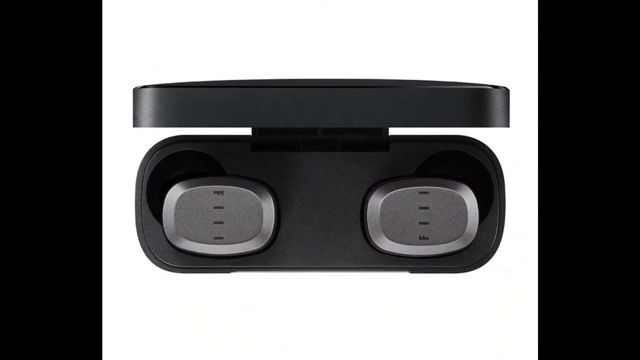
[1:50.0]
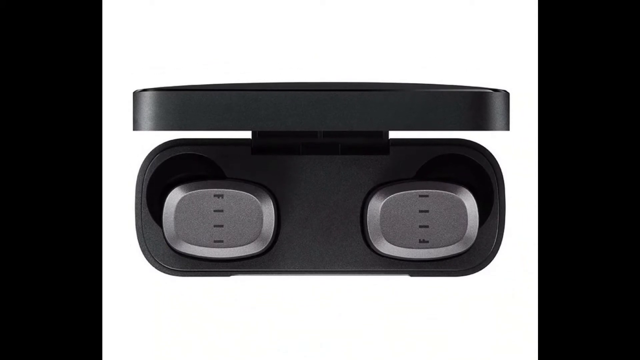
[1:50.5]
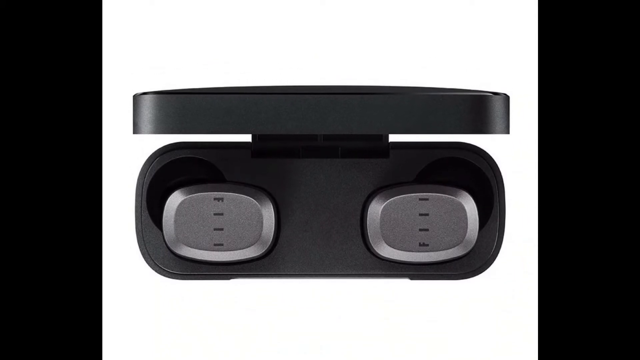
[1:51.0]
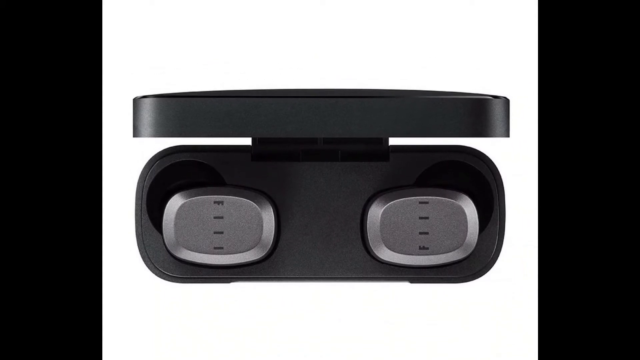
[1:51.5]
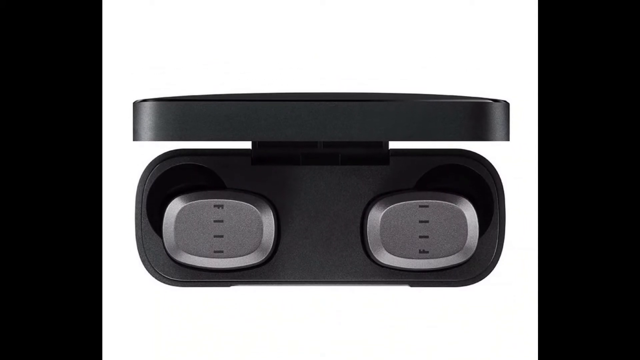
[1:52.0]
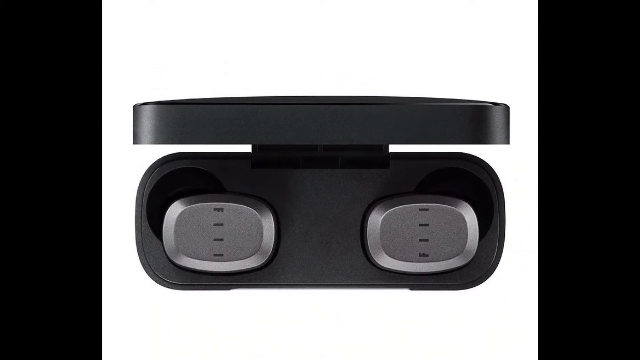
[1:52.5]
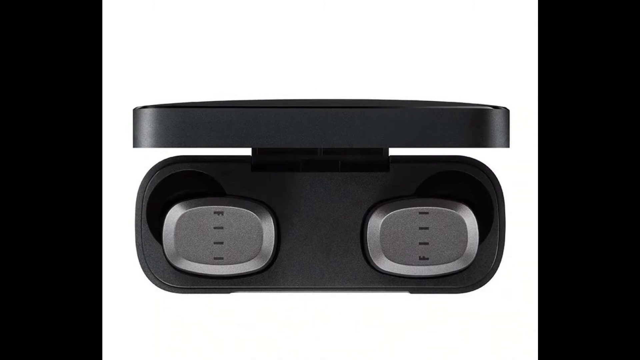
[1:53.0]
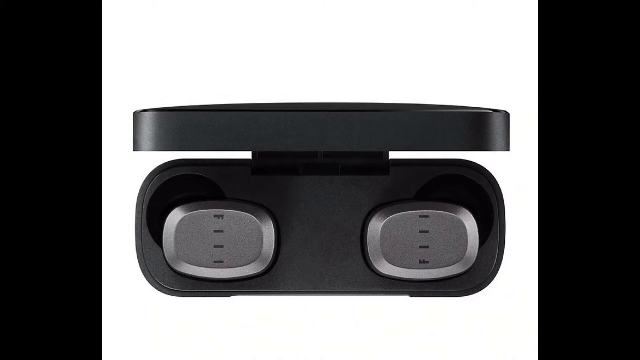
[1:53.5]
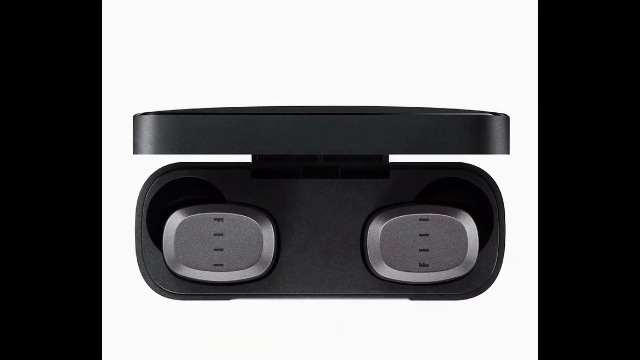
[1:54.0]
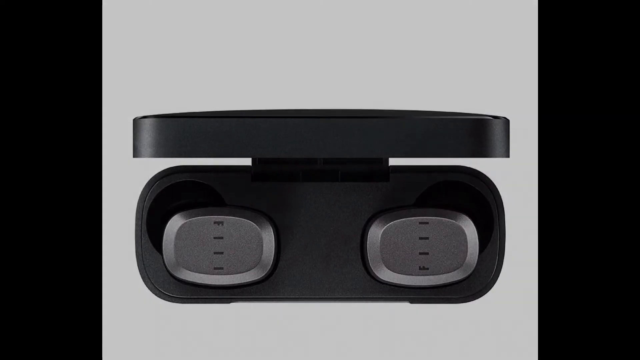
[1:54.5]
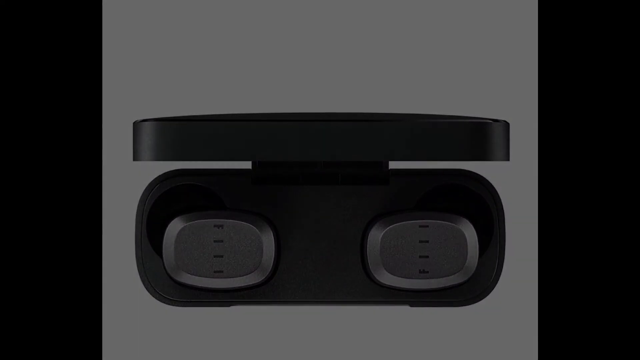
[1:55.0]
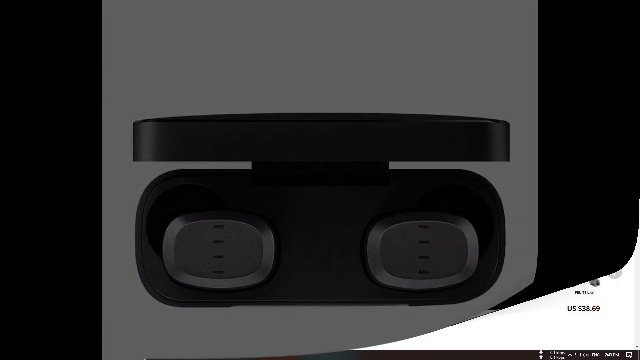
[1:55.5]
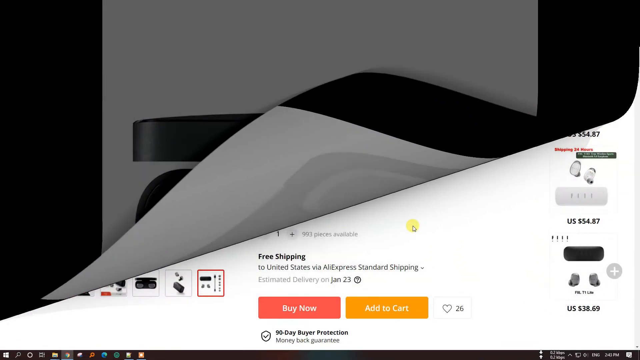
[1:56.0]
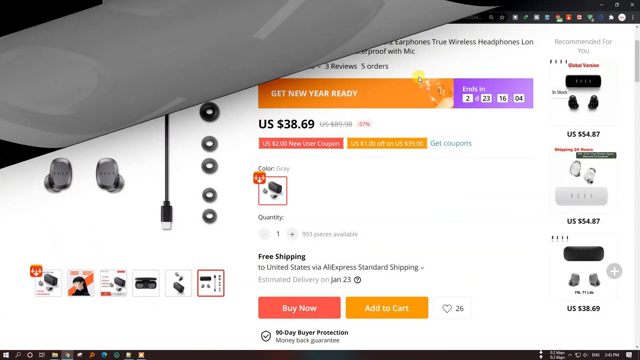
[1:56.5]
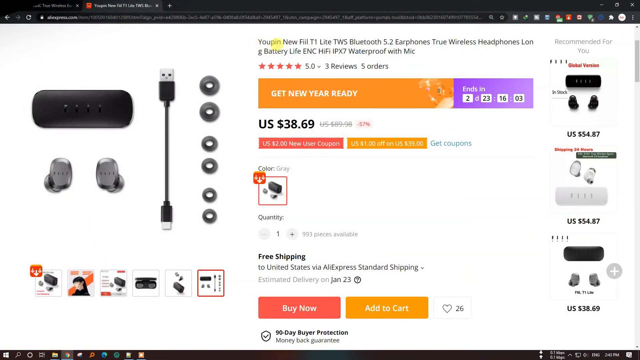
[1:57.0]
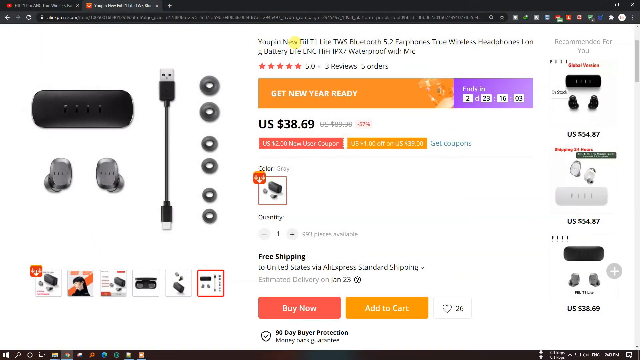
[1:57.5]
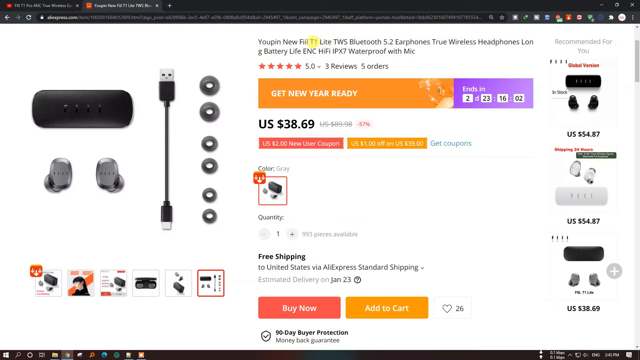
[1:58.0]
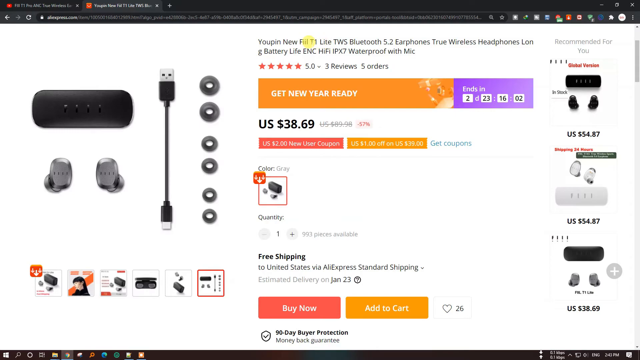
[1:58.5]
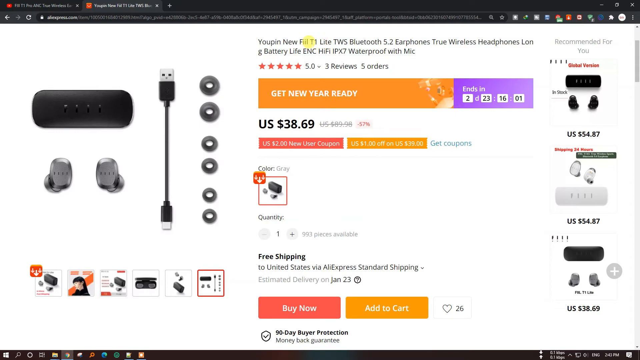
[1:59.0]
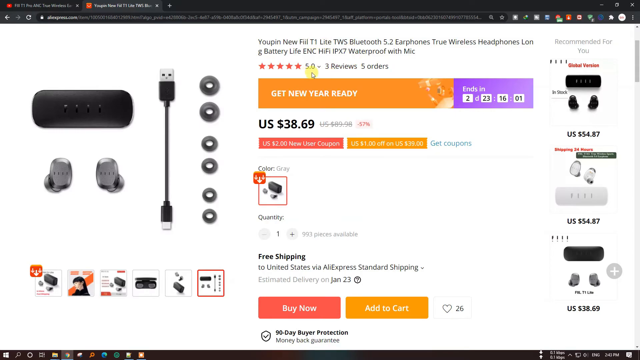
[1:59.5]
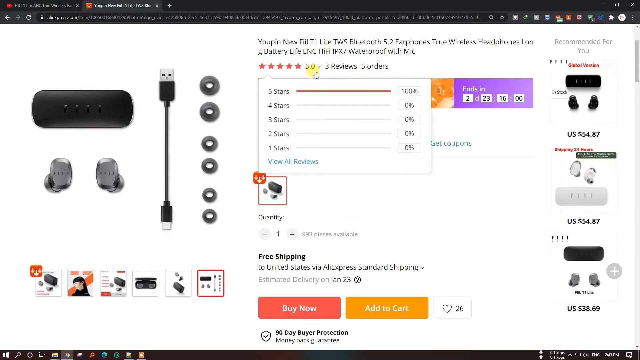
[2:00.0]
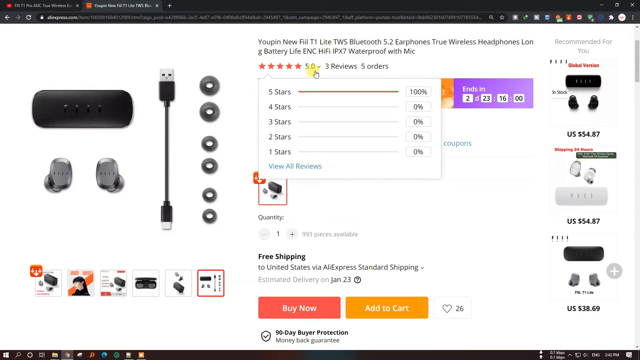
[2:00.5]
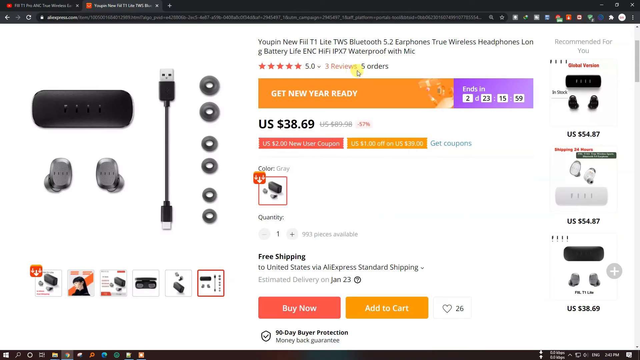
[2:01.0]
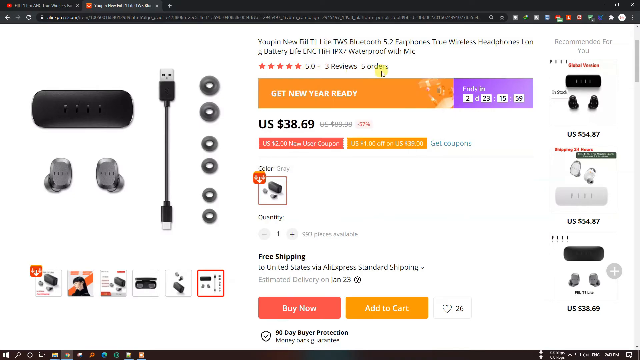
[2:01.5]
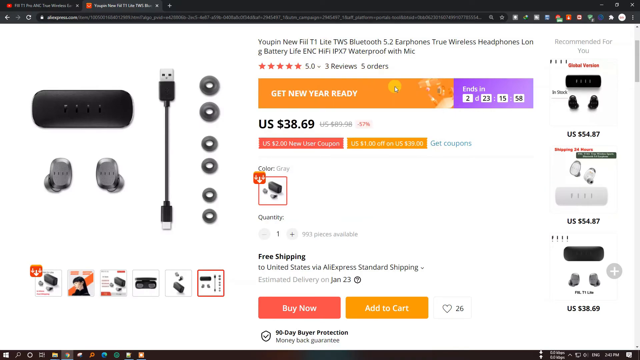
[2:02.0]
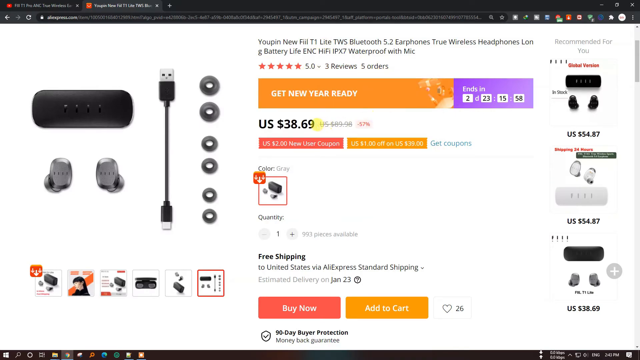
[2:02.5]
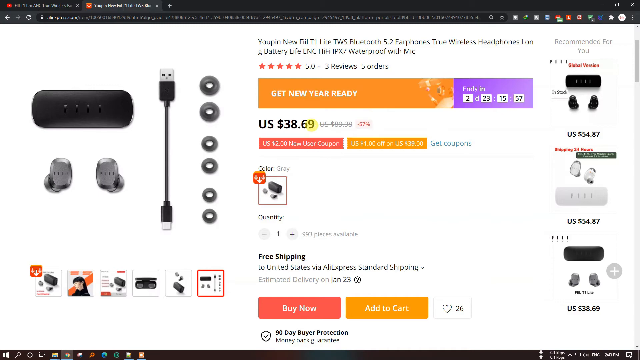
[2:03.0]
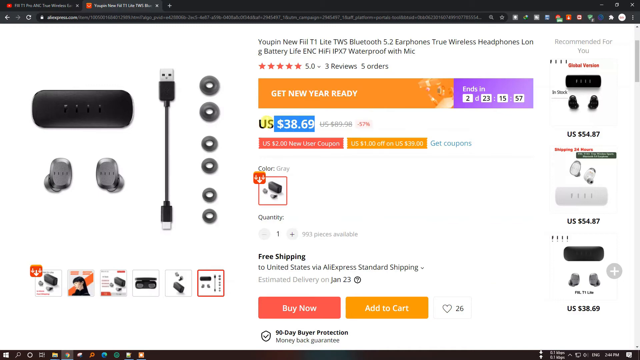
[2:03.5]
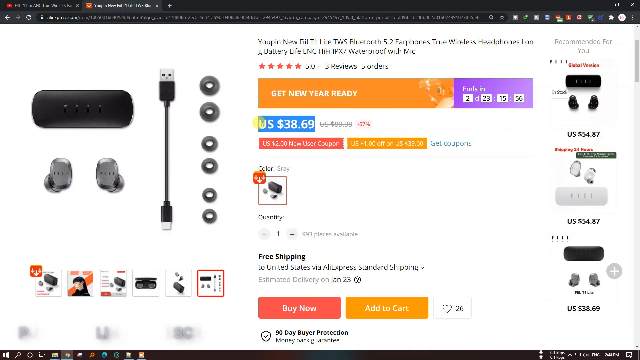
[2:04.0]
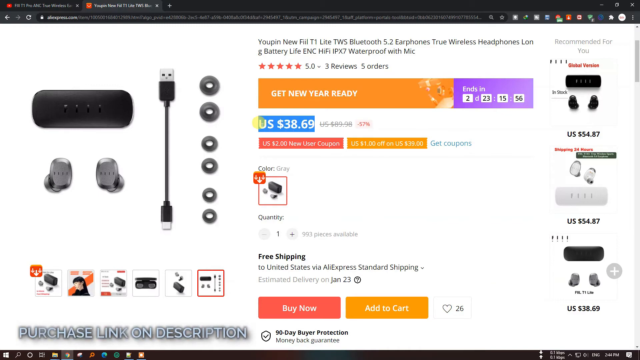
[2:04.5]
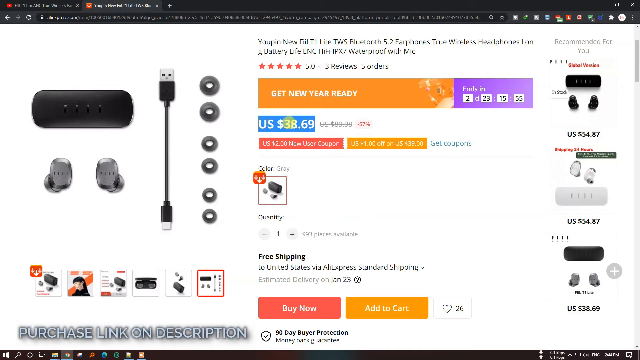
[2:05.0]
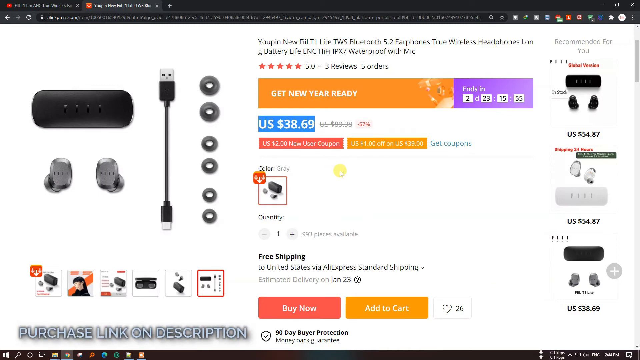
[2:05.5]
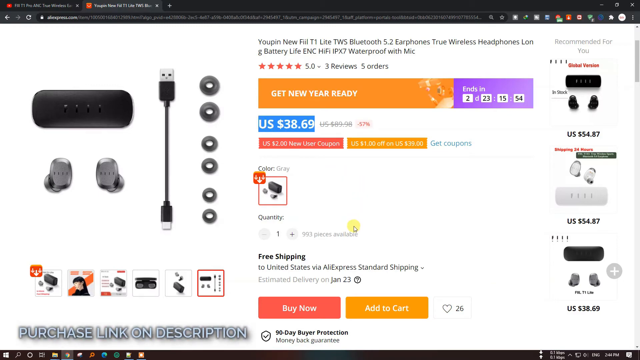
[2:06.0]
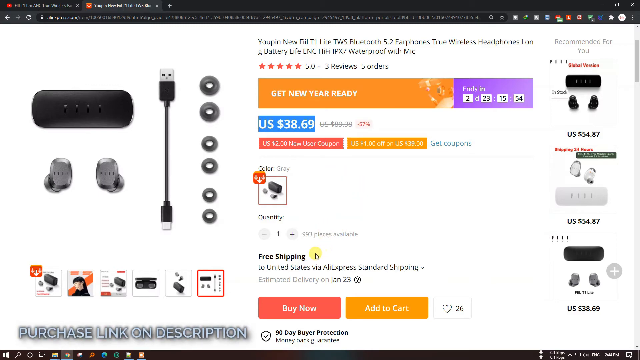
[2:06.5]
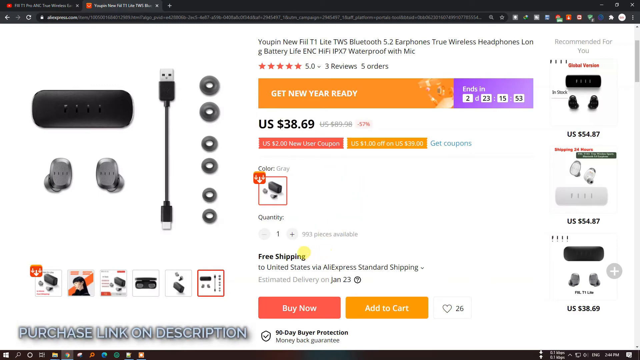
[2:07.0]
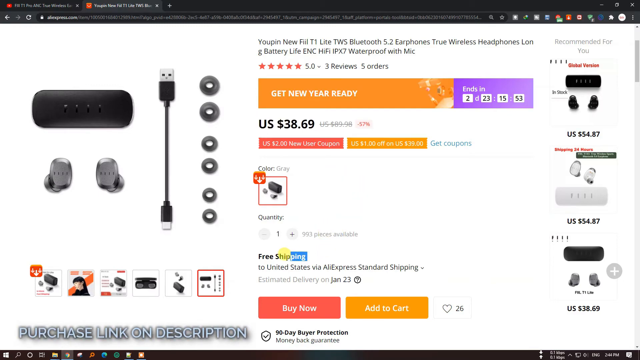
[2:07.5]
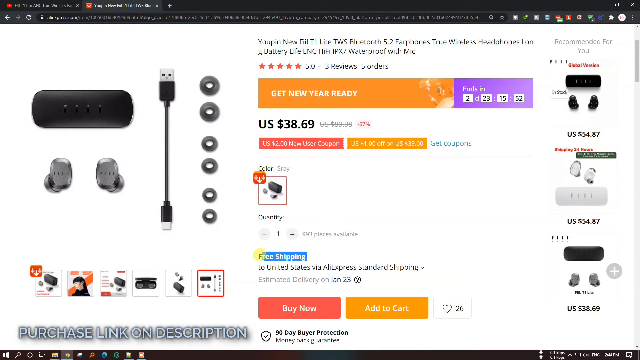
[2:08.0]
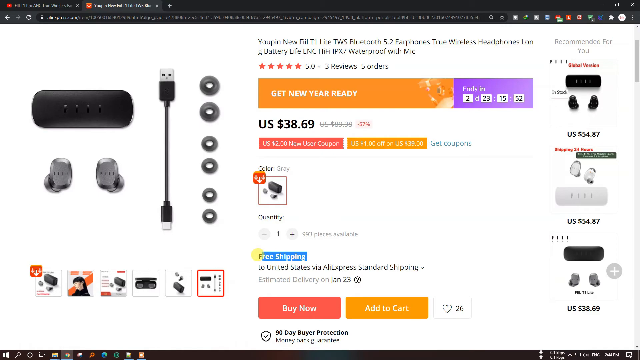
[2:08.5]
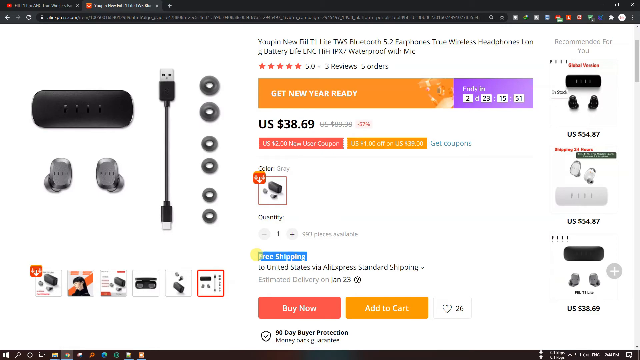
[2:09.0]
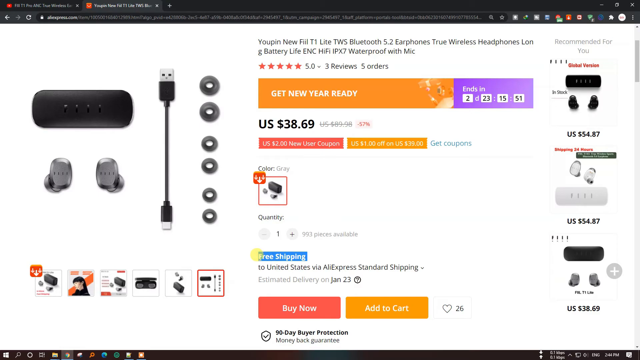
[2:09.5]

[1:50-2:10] The view looks down on the buds in their carrying case, which looks neat, tidy and compact. The image scrolls down the page, and a page-turning effect removes it. An e-commerce page follows, similar in approach to Amazon's, showing the earlier overhead picture of the buds, carrying case, cable and washers. The page invites viewers to get ready for the new year and states that the wireless buds have five stars from three reviews and have been ordered five times. They cost $38.69, reduced from $89.98. There are 993 pieces available, shipped to the USA from China by Aliexpress, arriving by the 23rd of January. A mouse pointer moves around the page over the reviews, the price and other details.